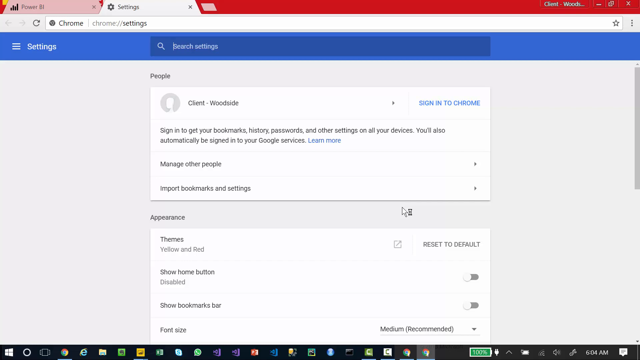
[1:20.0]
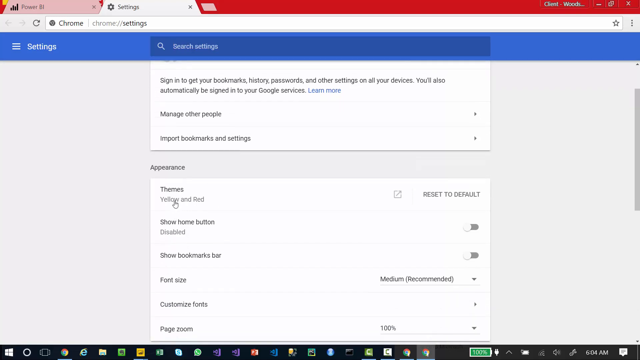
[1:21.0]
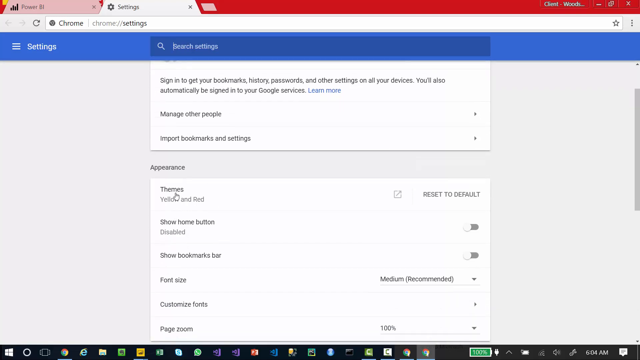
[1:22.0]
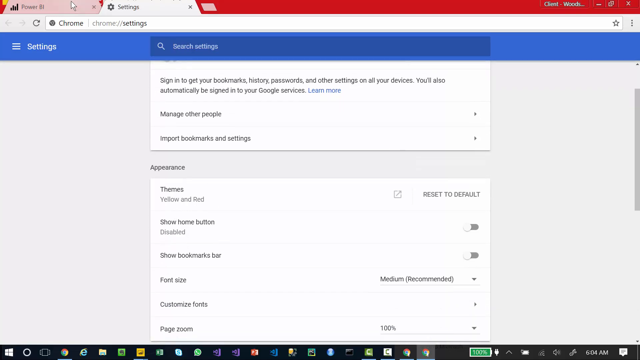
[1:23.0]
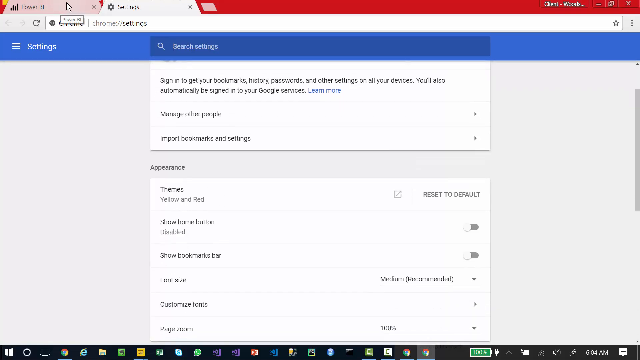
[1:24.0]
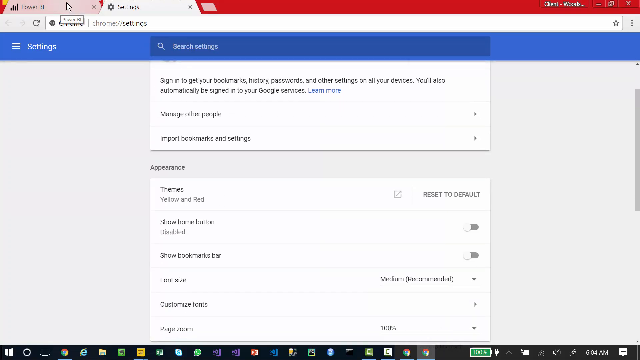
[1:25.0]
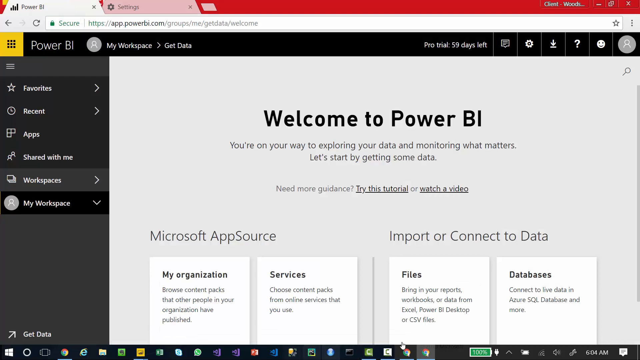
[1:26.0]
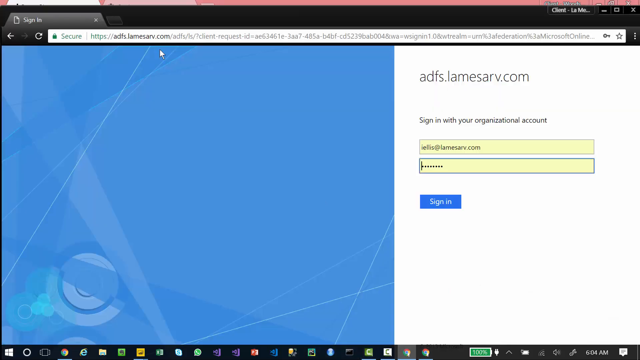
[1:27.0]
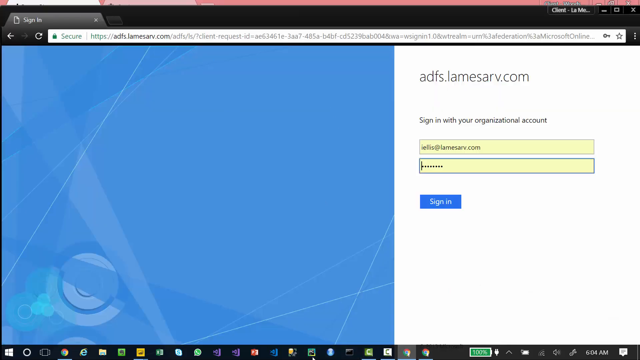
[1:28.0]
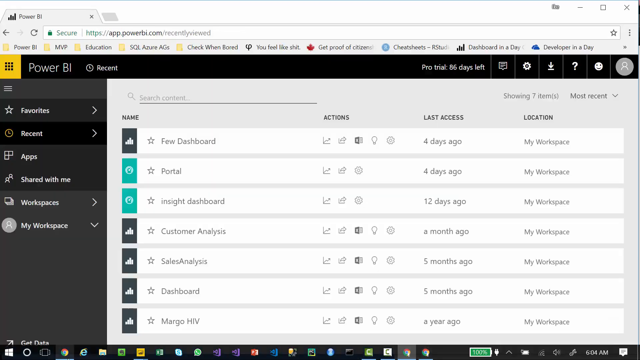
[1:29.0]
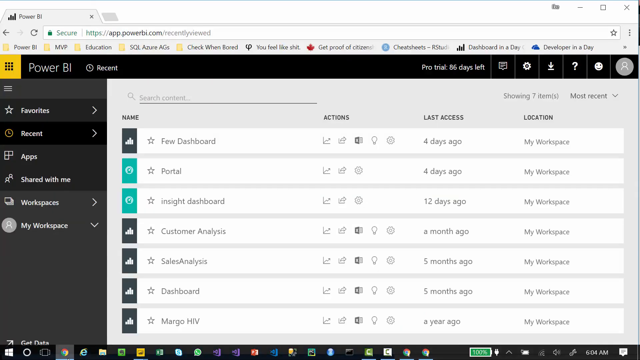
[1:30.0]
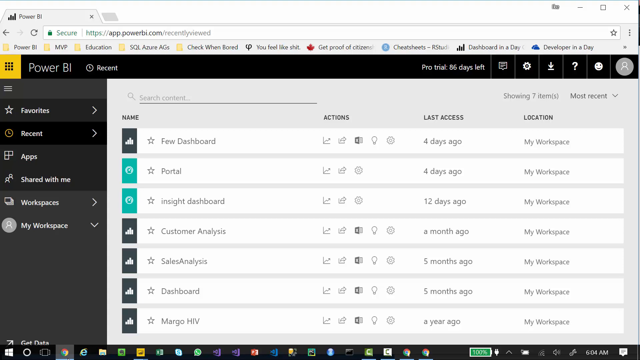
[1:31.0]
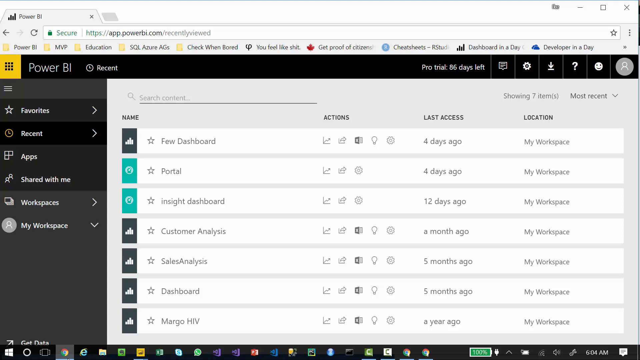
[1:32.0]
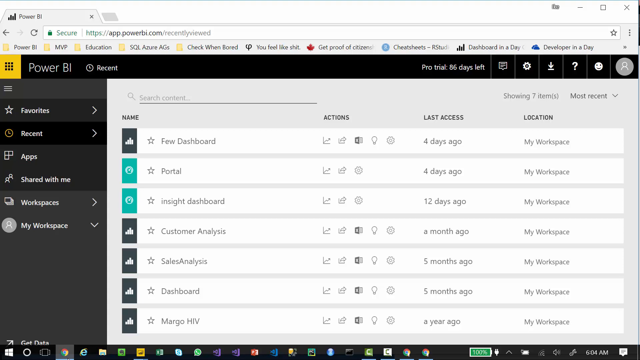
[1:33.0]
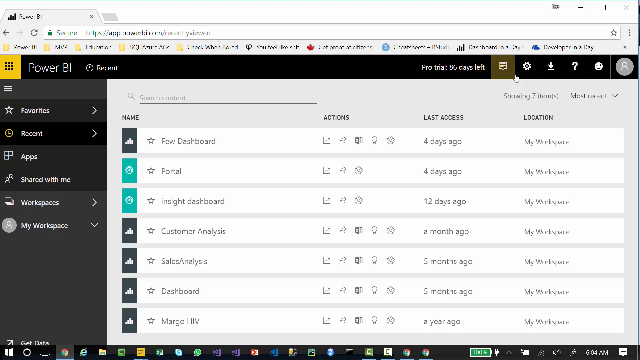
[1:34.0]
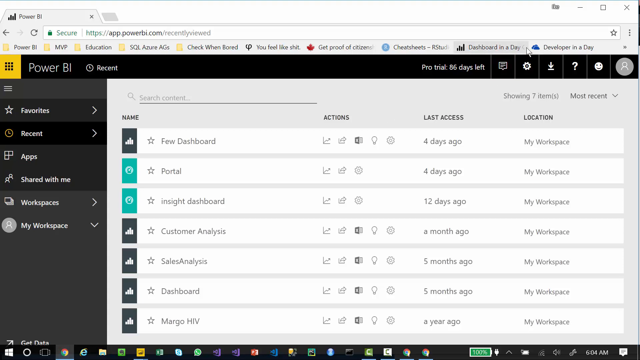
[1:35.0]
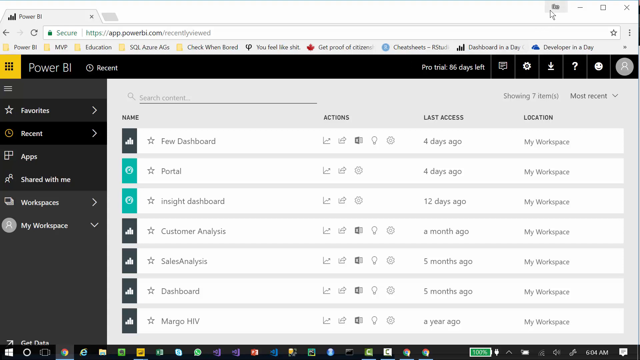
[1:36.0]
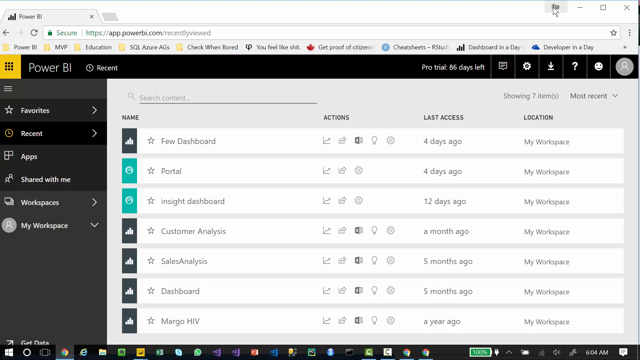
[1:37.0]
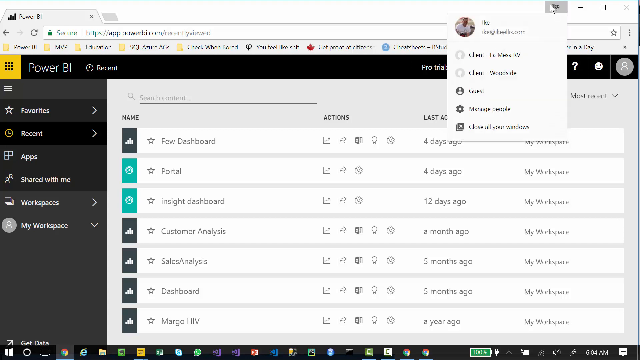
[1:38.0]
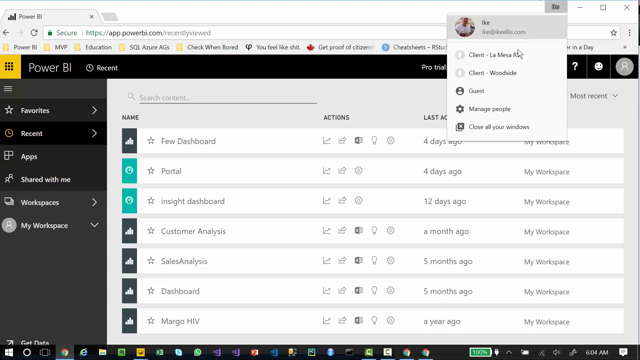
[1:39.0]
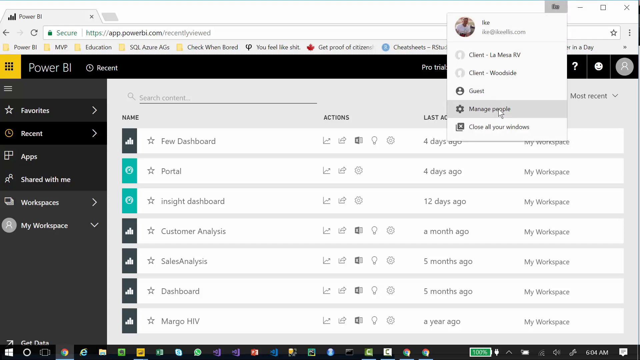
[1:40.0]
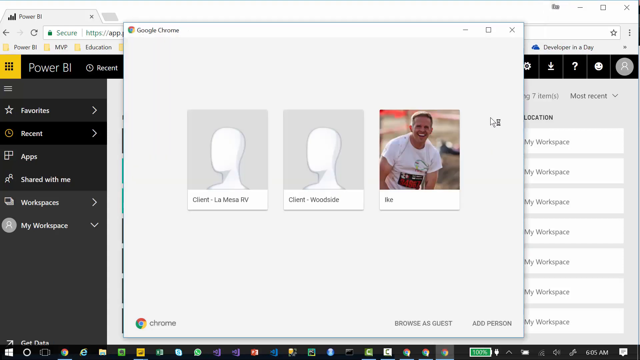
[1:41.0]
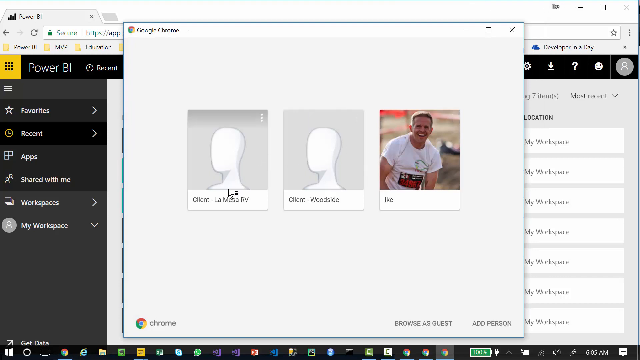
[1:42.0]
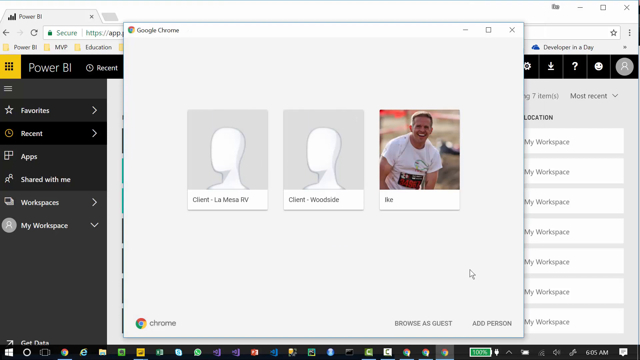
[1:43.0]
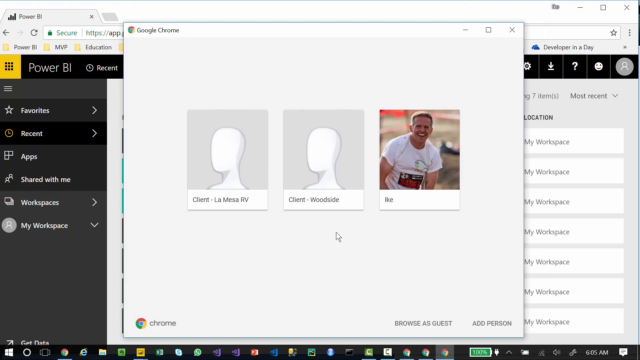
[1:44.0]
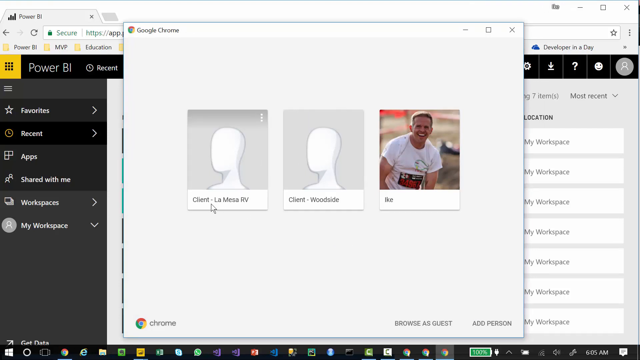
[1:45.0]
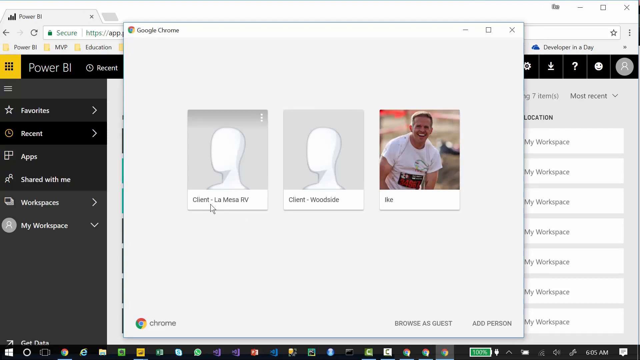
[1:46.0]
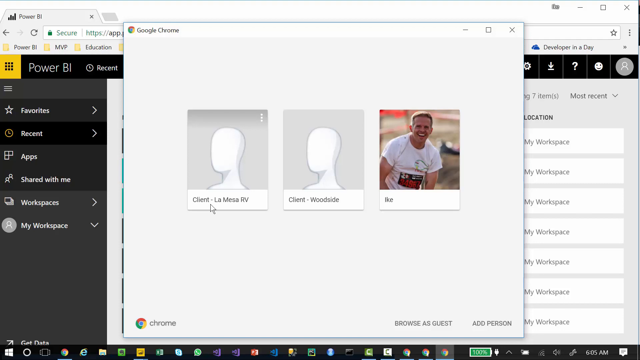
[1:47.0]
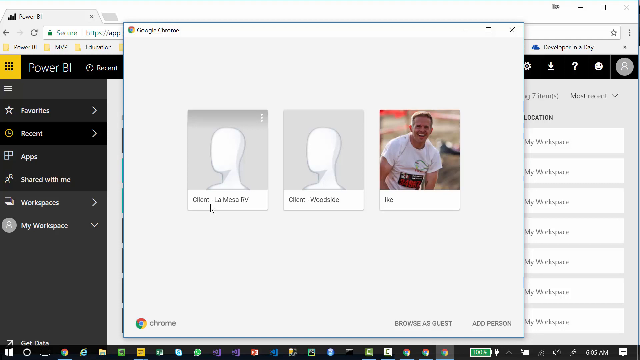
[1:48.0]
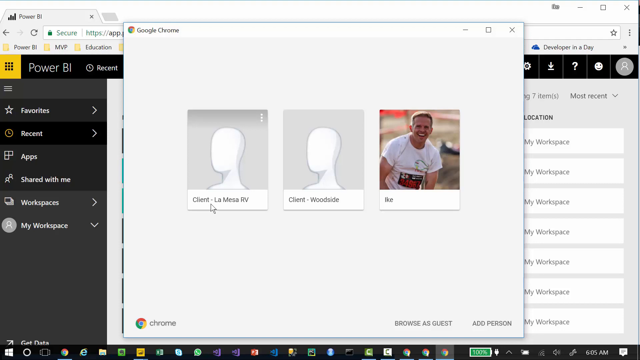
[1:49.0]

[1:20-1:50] A Chrome website shows a settings area with various options. The person moves away from the settings area to a different section listing roles that reads "sales analysis, dashboard, customer analysis portal, phone, dashboard" along with other entries, showing a number of portals to choose from.